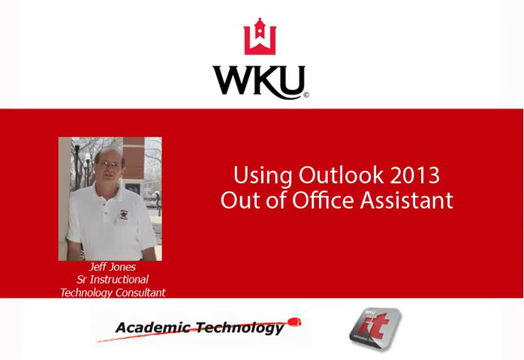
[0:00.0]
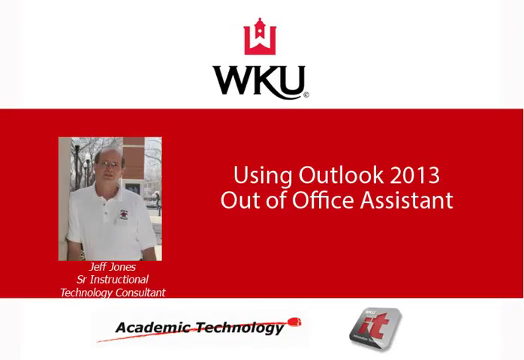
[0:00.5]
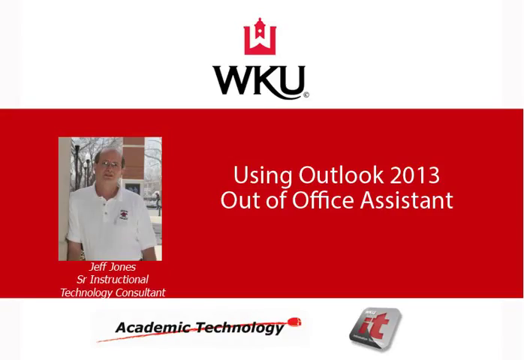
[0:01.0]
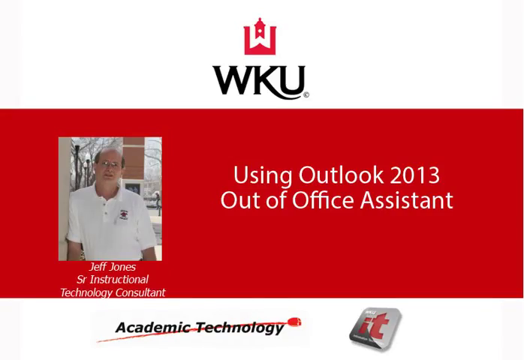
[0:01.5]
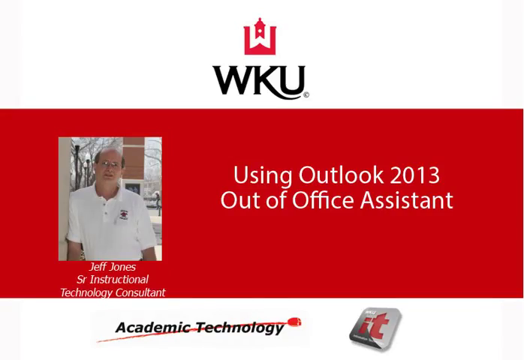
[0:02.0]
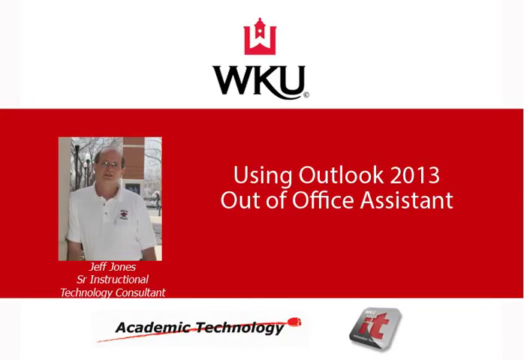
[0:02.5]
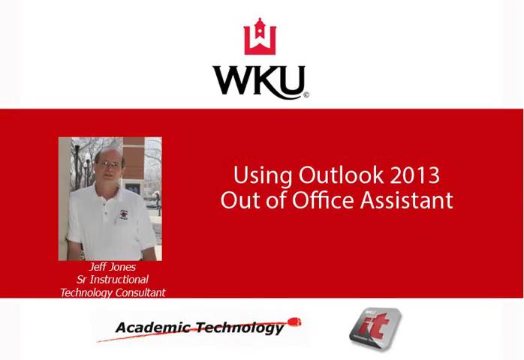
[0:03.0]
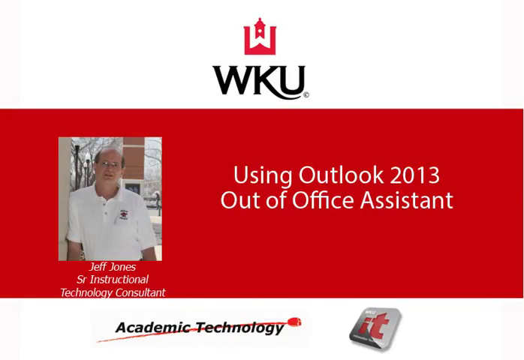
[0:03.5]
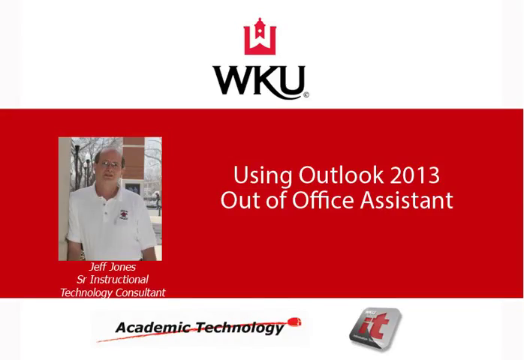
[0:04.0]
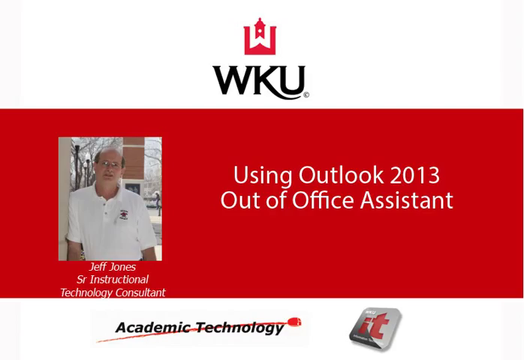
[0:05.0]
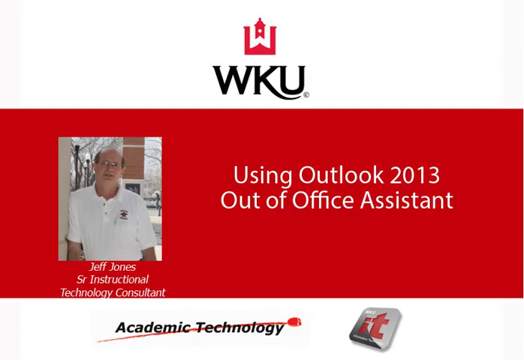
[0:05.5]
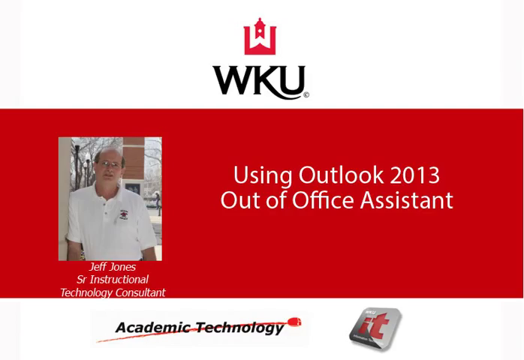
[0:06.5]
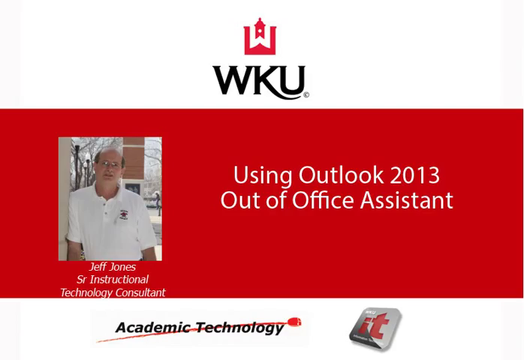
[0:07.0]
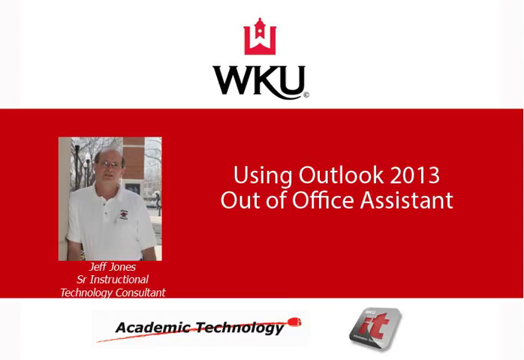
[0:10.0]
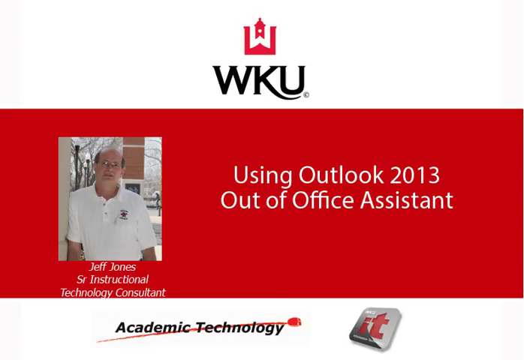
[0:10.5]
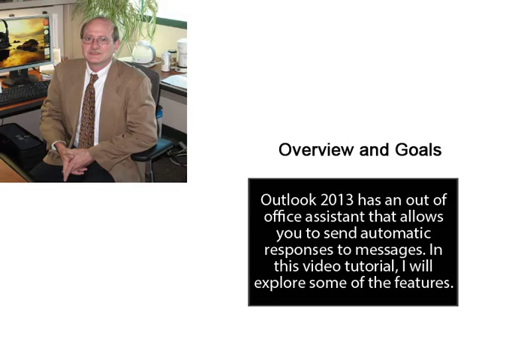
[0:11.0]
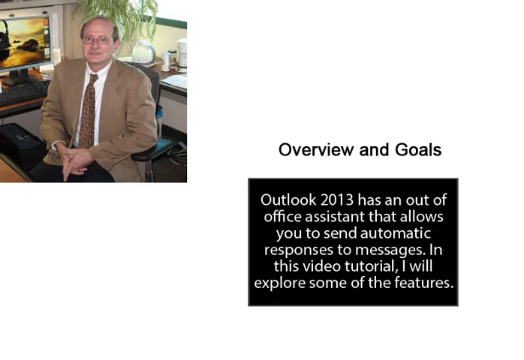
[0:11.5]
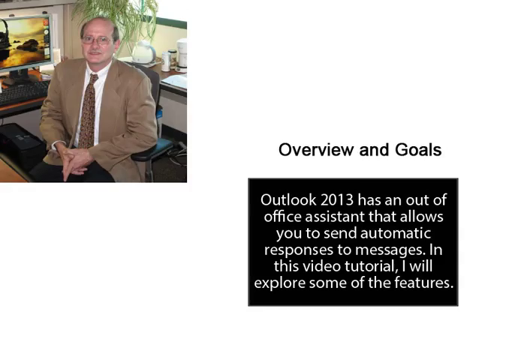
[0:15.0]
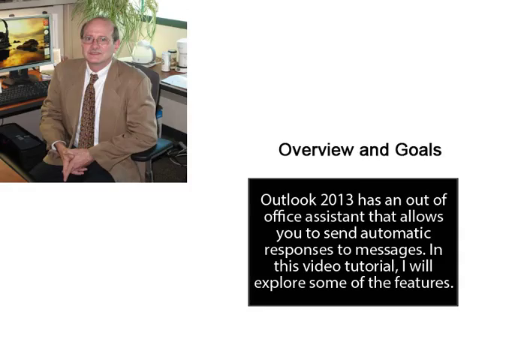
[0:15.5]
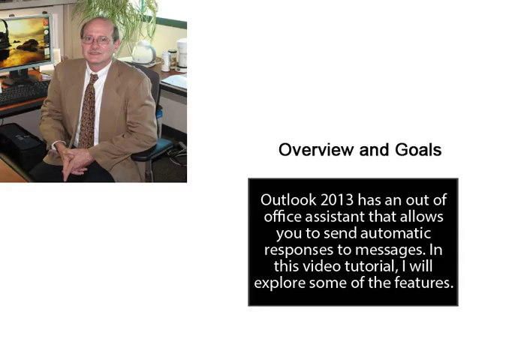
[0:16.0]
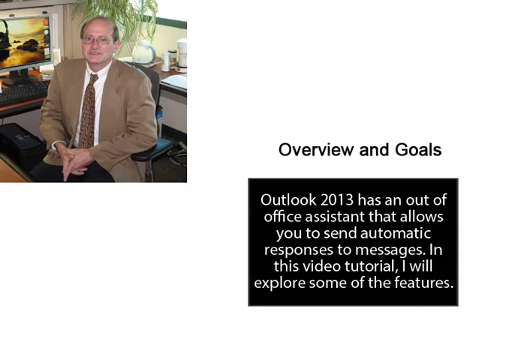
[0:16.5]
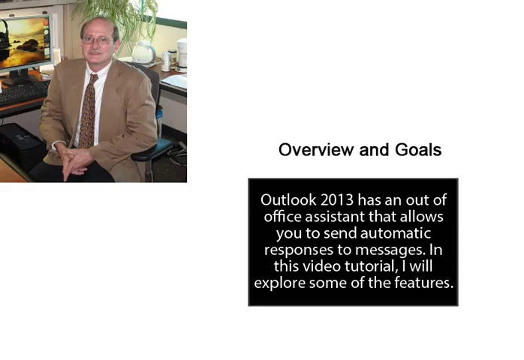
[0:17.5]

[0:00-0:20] Against a red background, an image of a man appears on the left-hand side. He wears a white short-sleeved shirt with an emblem on the pocket area and two buttons. He wears glasses and looks straight ahead; he is bald on top of his head with short brown hair by his ears. He is standing in an outside scene, leaning against a wall. In the red area to his right, white text reads "Using Outlook 2013, Out Of Office Assistant." Under the man's picture, more text reads "Jeff Jones, Sr Instructional Technology Consultant." Above the red area is a logo: a white W with a red outline and a little red house in its center, with the capital letters "WKU" in black beneath it.